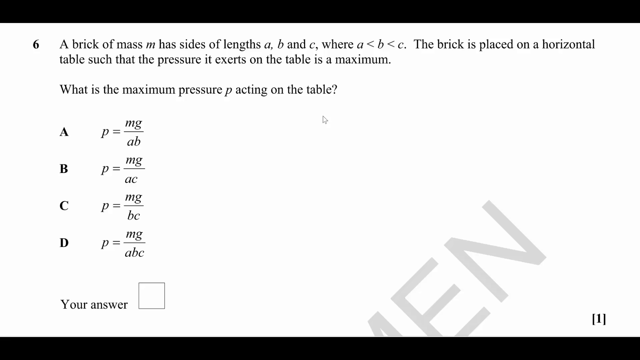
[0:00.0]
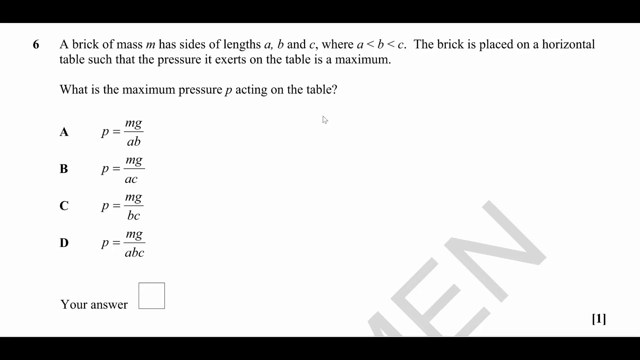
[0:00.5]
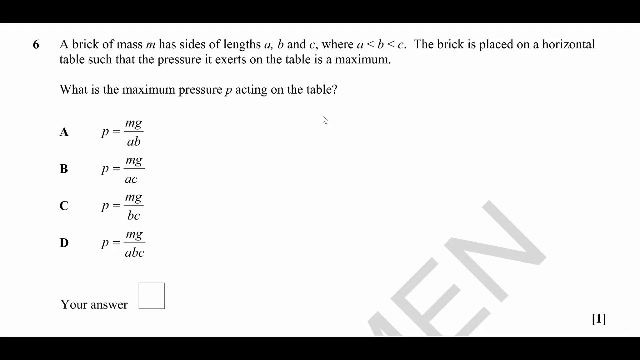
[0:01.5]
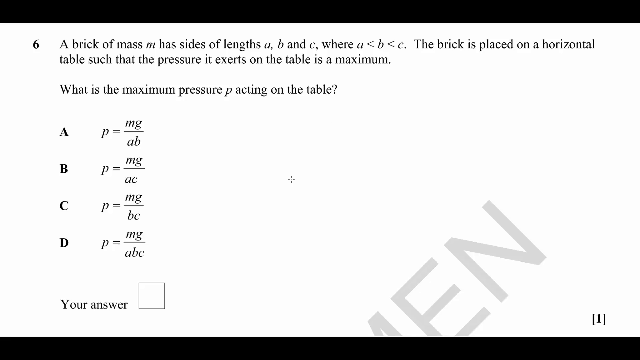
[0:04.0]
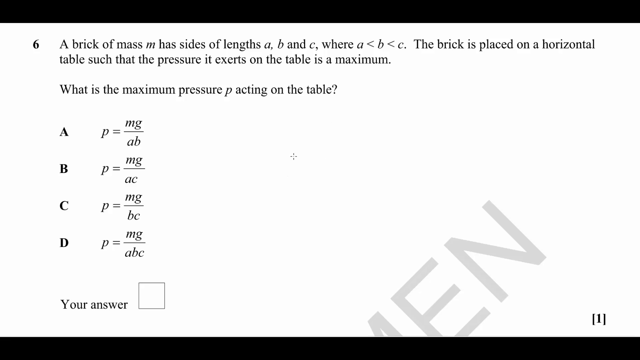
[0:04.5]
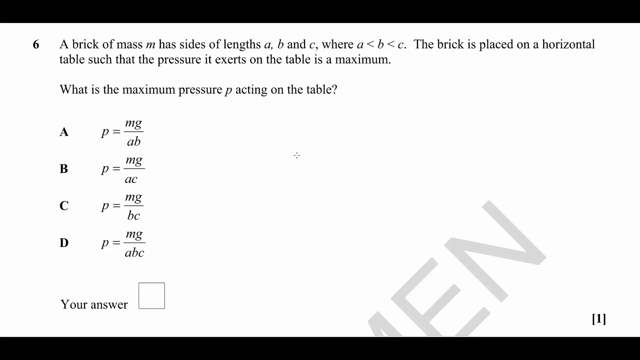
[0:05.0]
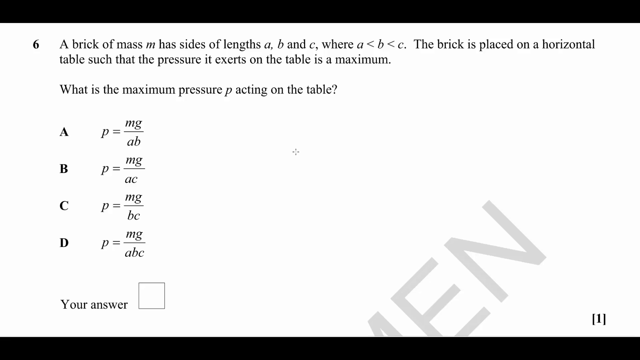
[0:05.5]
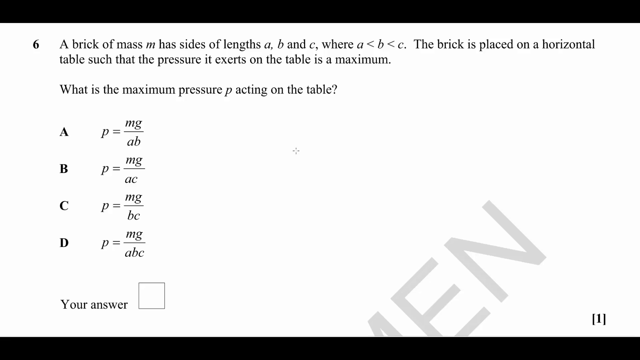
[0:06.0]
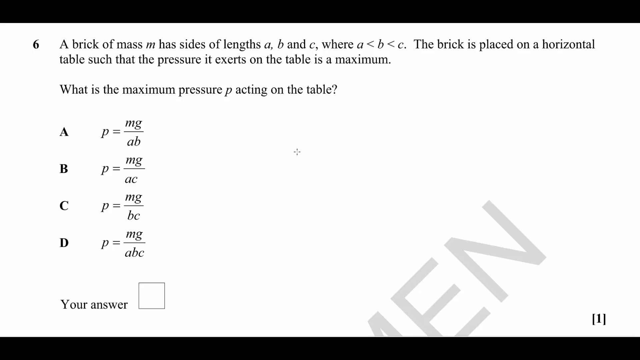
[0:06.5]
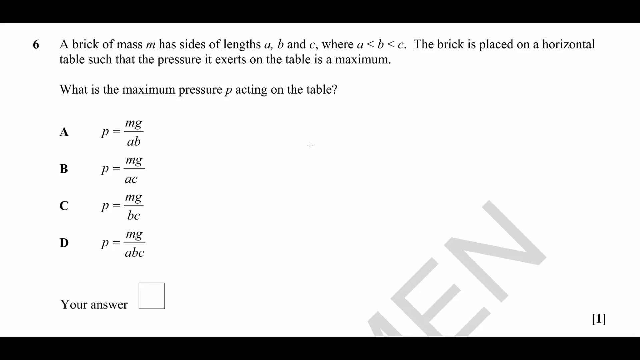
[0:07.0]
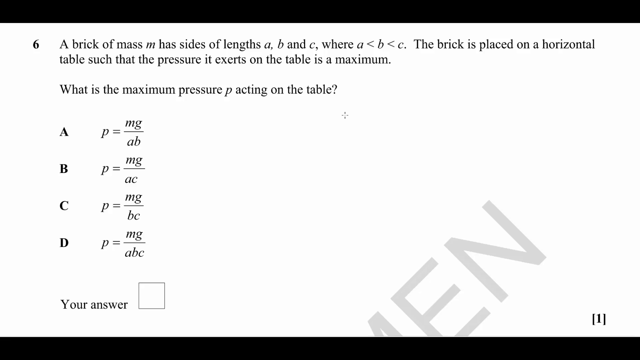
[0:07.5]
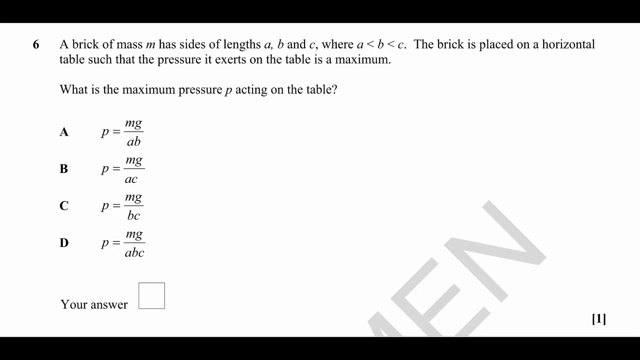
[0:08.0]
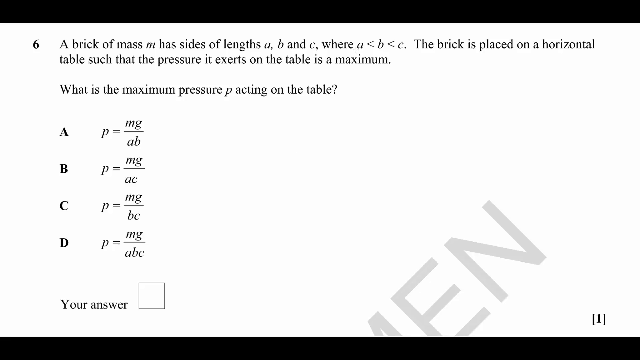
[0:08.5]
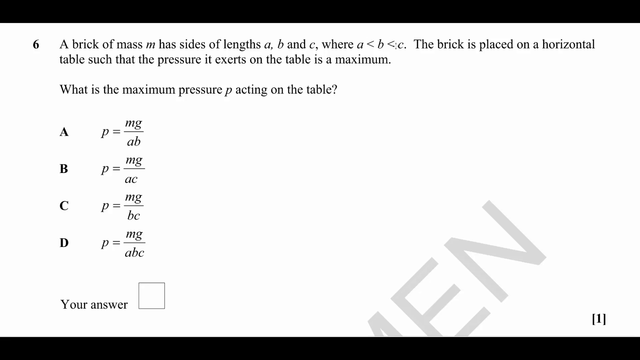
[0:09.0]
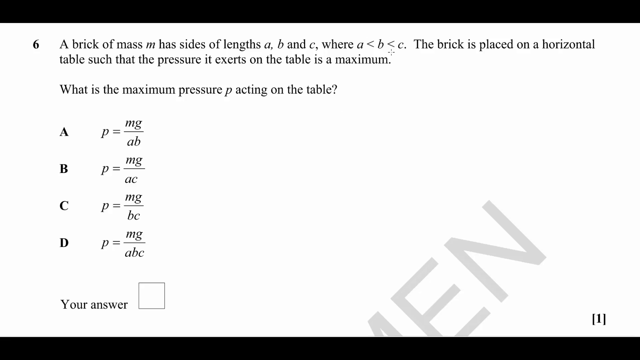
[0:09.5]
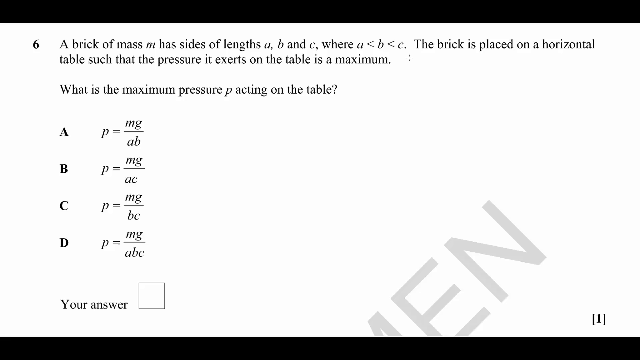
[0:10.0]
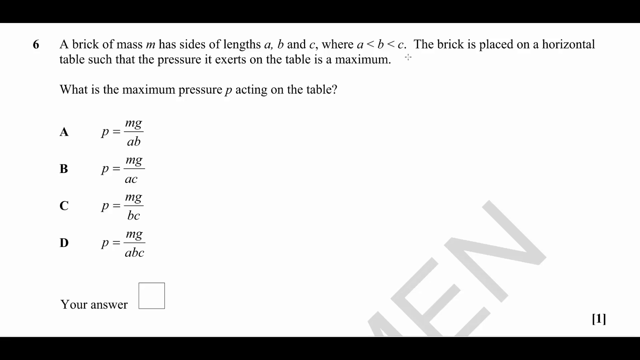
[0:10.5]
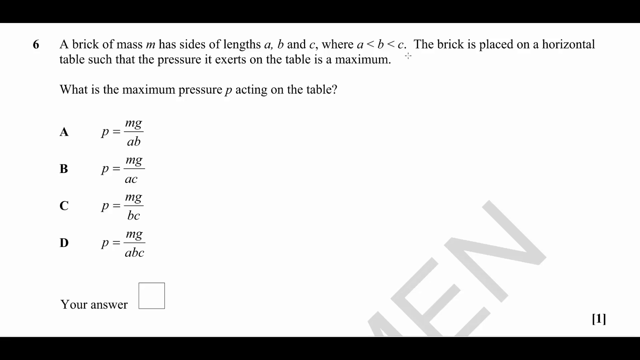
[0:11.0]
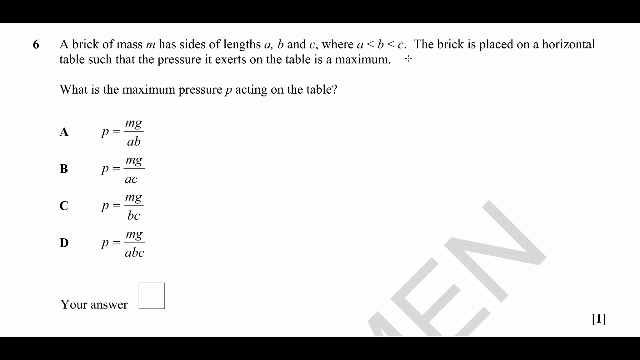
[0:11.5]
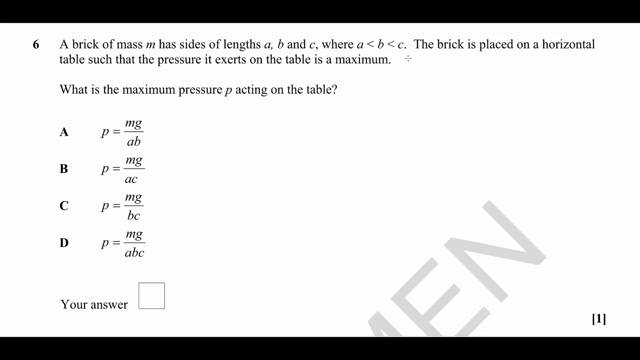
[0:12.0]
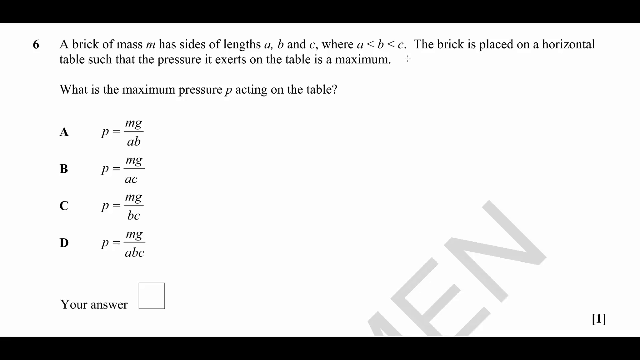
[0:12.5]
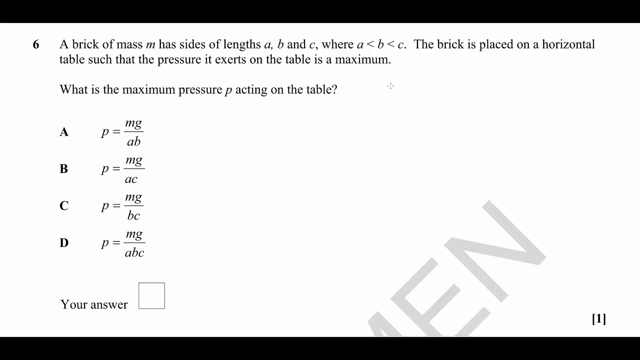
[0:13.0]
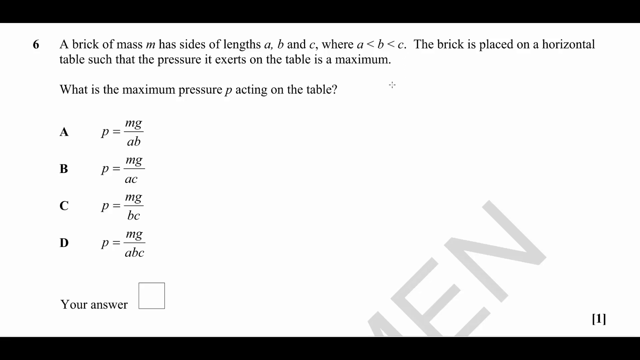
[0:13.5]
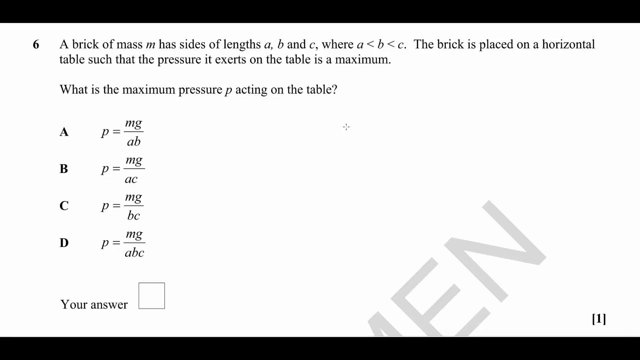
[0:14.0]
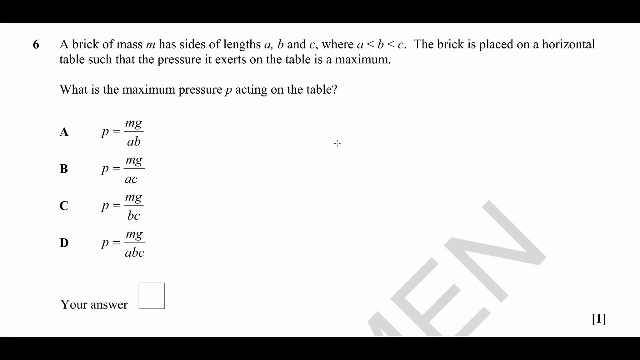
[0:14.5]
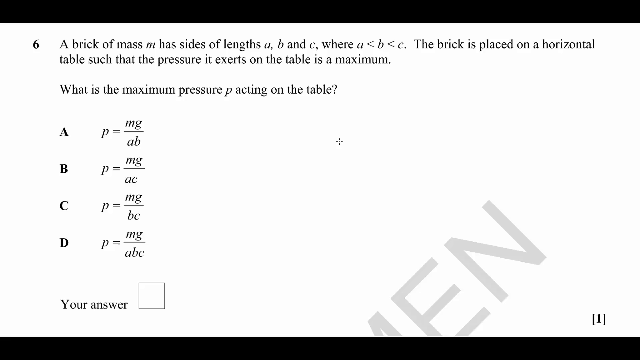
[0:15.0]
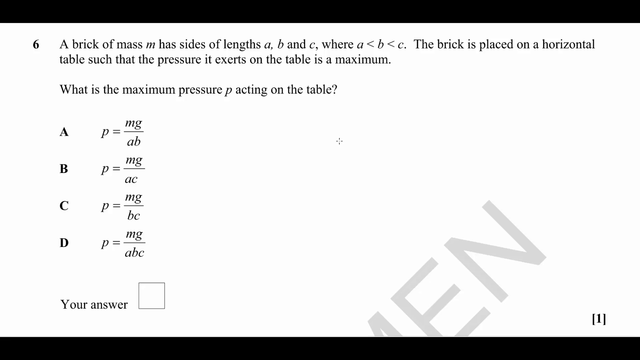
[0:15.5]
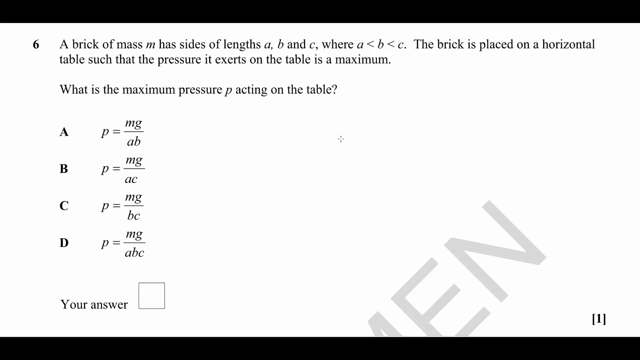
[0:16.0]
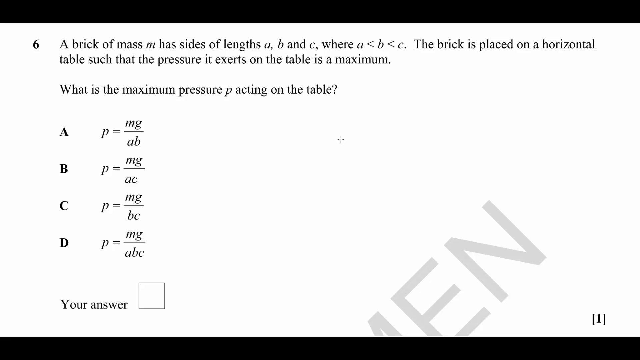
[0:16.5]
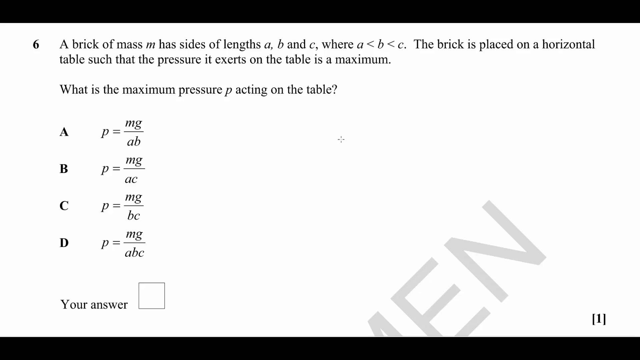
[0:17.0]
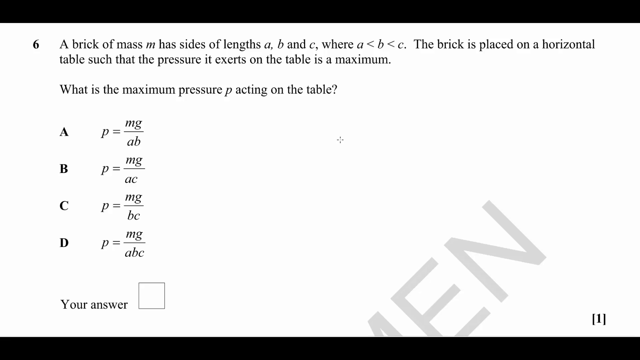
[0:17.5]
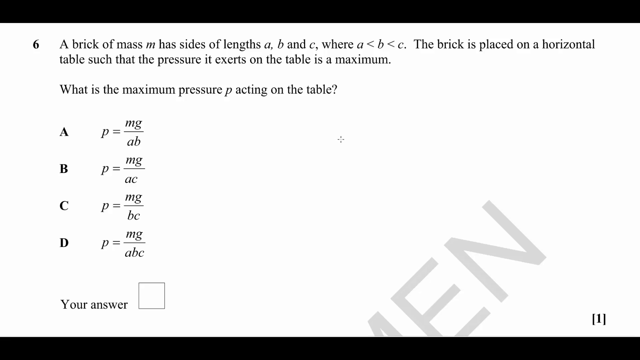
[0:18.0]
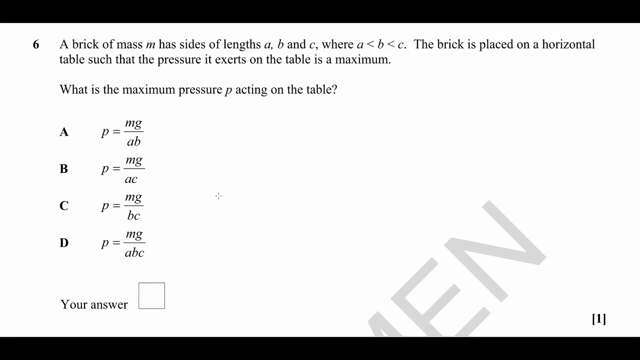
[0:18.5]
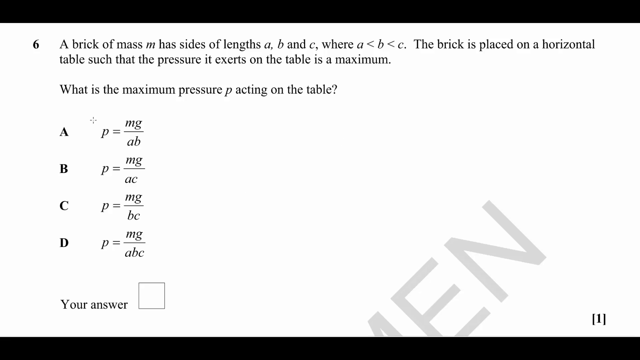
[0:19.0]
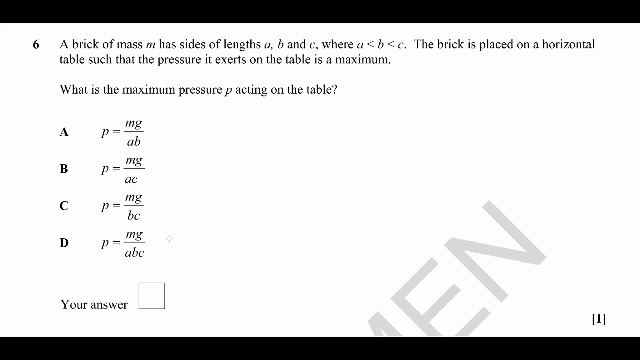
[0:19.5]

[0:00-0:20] A math question appears in black text on a white background, with a black border visible at the top and bottom of the screen. The question reads: "a brick of mass m has sides of lengths a, b, and c, where a is smaller than b, which is smaller than c. The brick is placed on a horizontal table such that the pressure it exerts on the table is at maximum. What is the maximum pressure p acting on the table?" Below it, four answer choices give varying values of p in fraction format. In the bottom left corner, a line reads "your answer" next to a blank box where the letter of the correct answer is to be entered. A crosshair-style cursor hovers over the question text, likely reading through the question. Some sort of watermark text is visible near the bottom right corner, and the letters "e" and "n" appear at a 45-degree angle in a light grey, watermark-like font across the bottom of the screen.